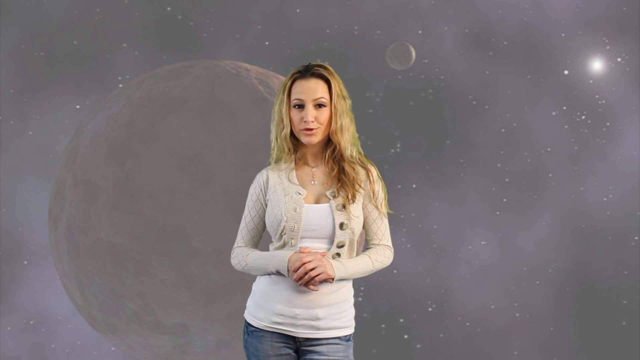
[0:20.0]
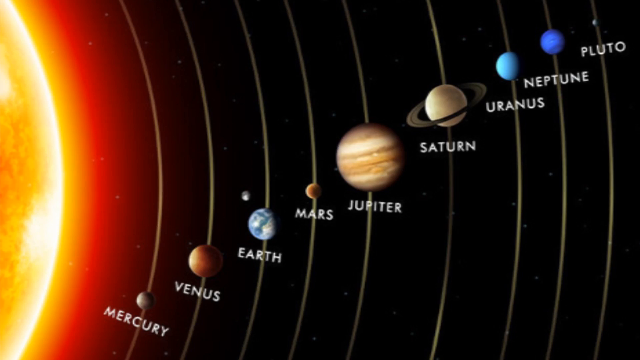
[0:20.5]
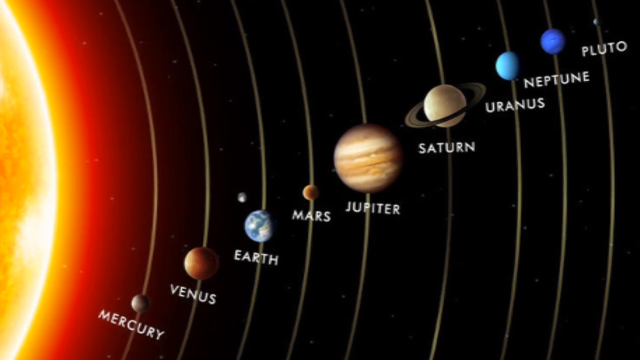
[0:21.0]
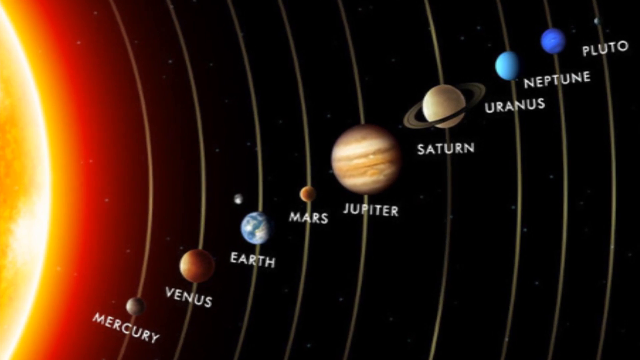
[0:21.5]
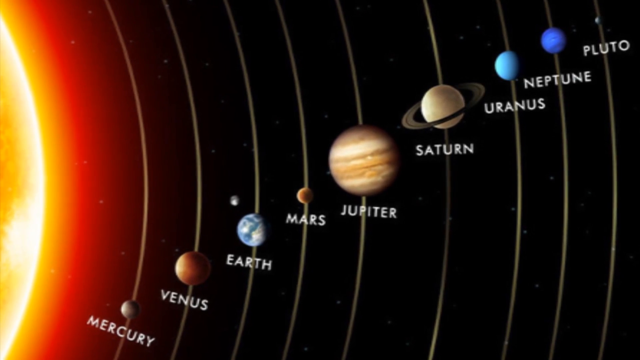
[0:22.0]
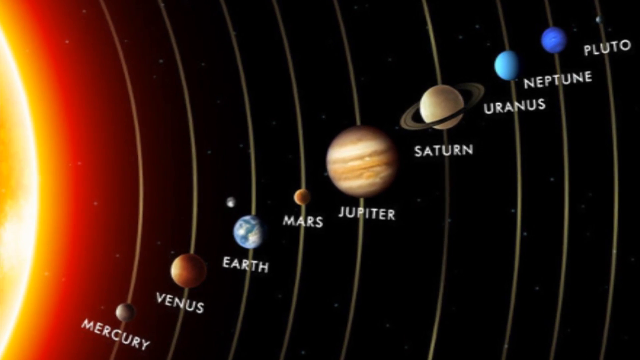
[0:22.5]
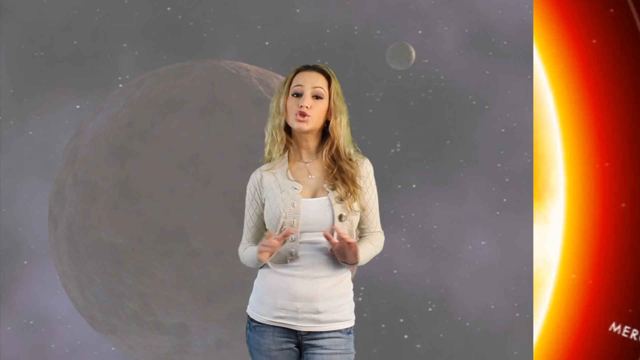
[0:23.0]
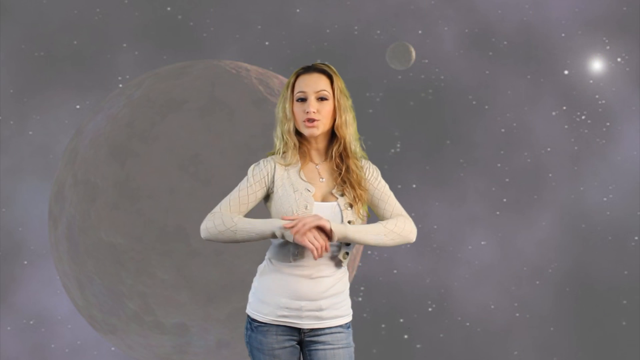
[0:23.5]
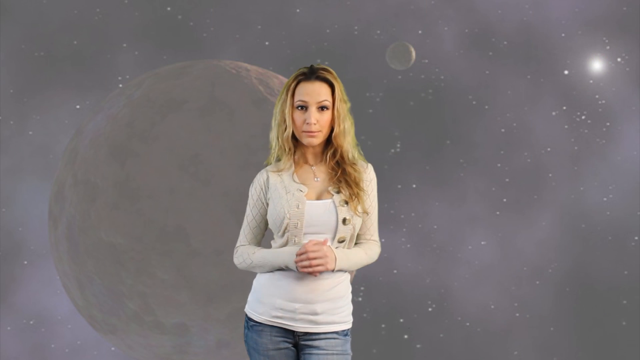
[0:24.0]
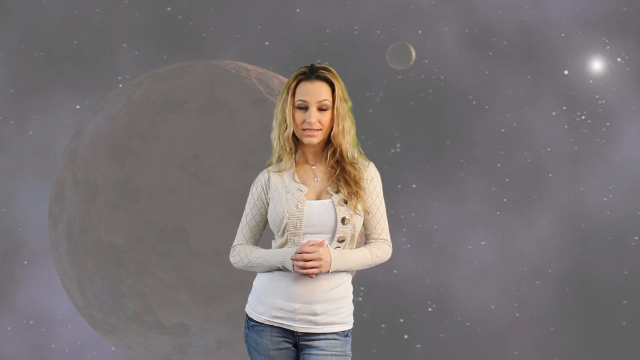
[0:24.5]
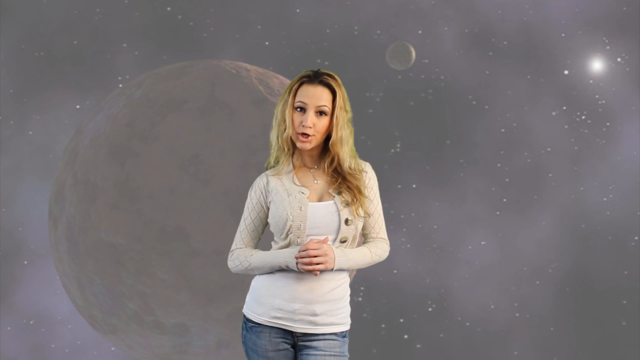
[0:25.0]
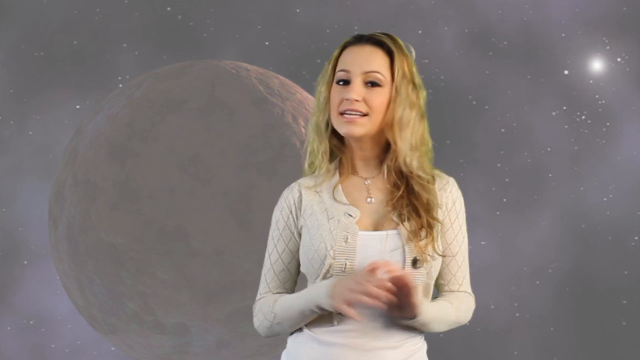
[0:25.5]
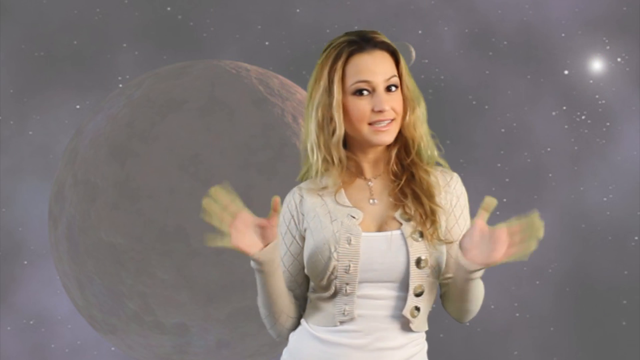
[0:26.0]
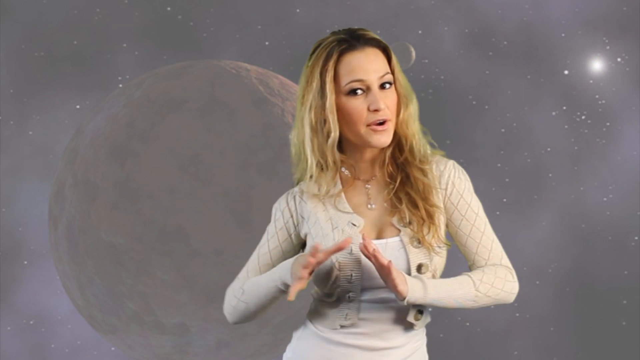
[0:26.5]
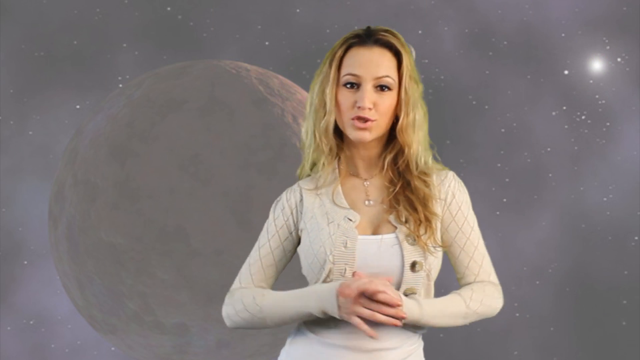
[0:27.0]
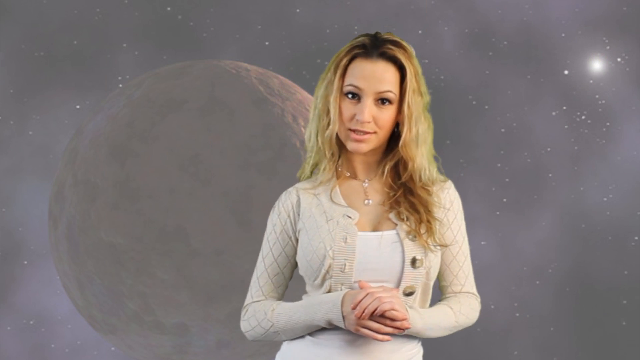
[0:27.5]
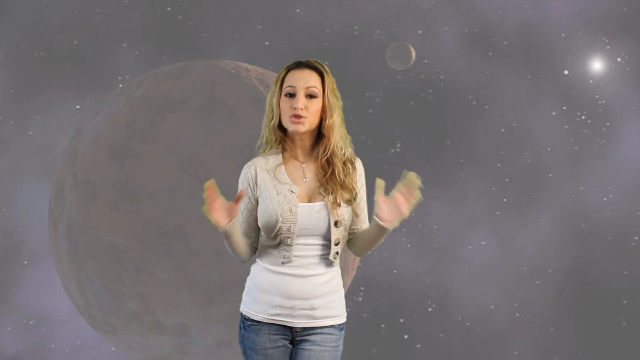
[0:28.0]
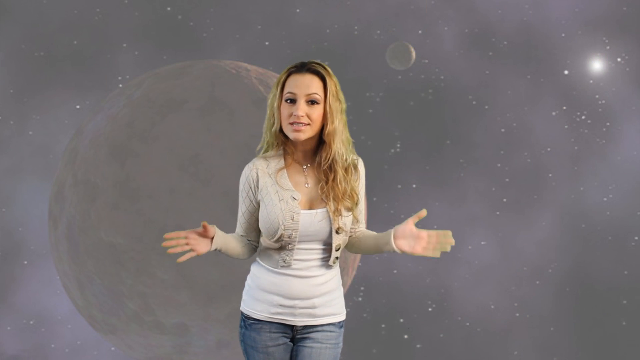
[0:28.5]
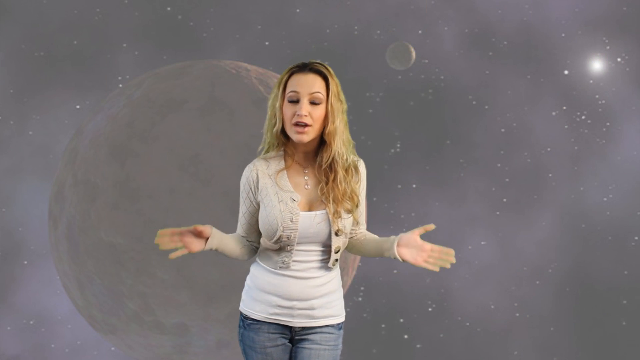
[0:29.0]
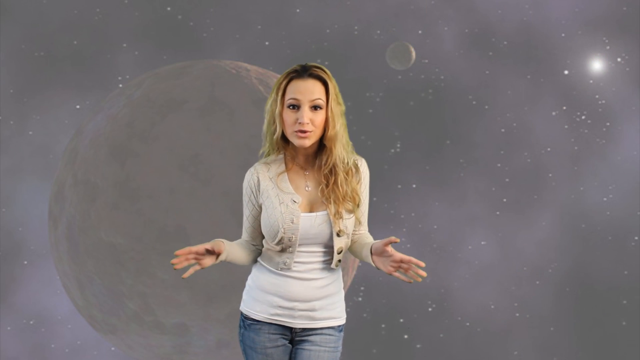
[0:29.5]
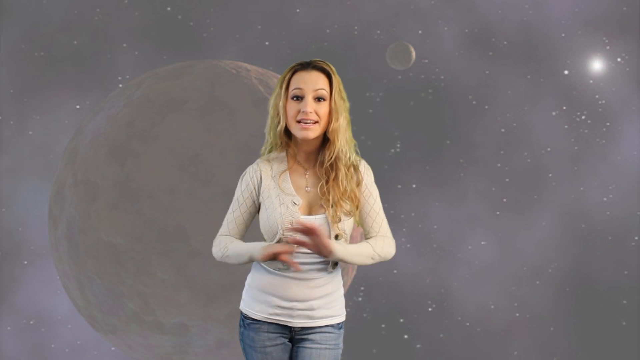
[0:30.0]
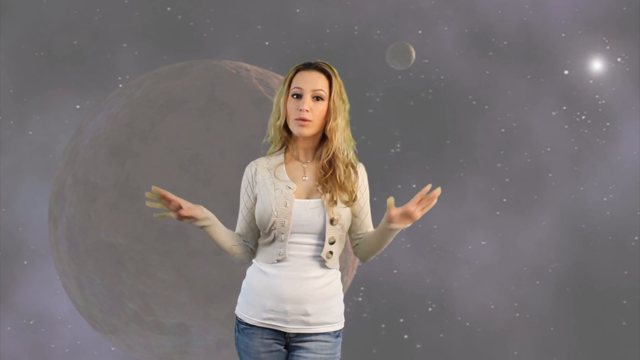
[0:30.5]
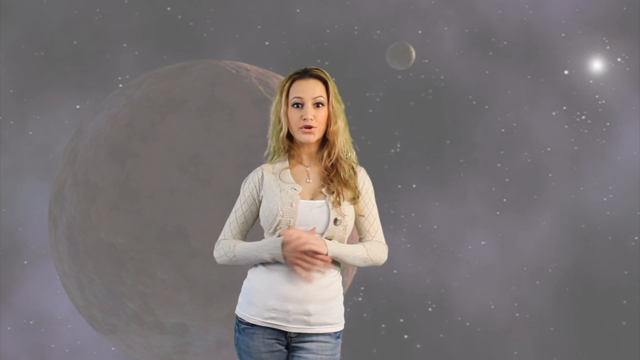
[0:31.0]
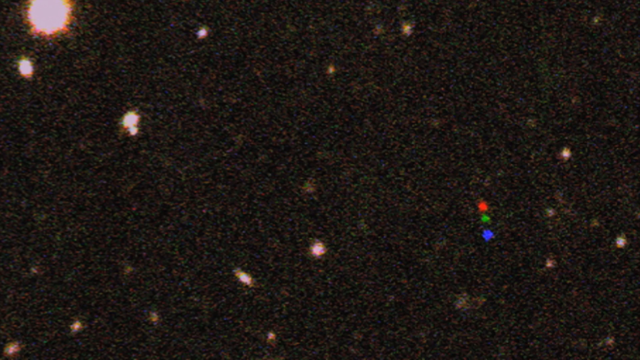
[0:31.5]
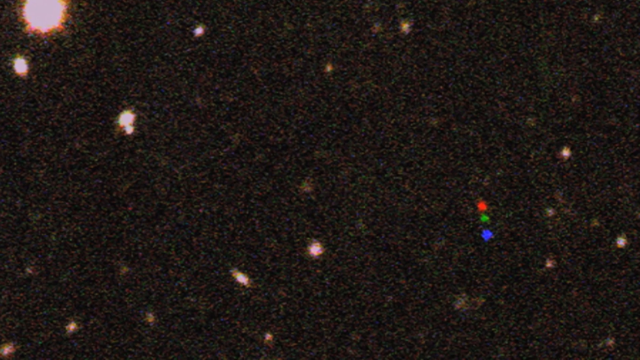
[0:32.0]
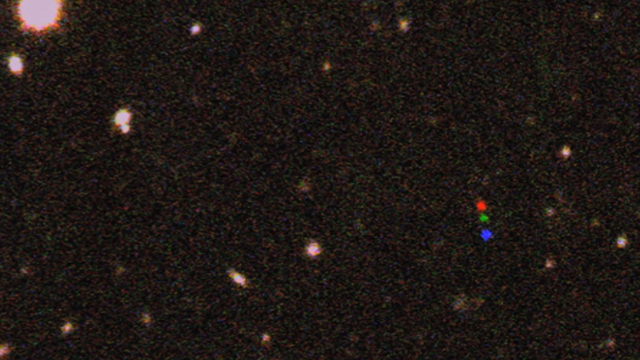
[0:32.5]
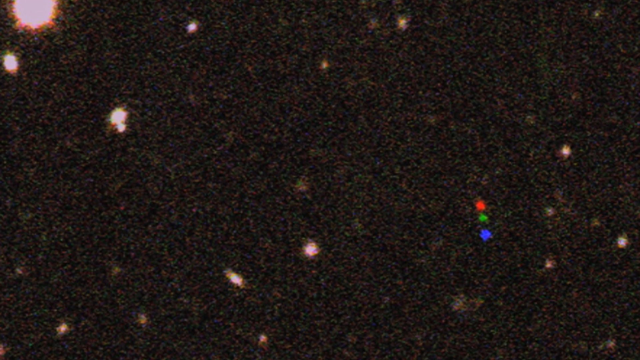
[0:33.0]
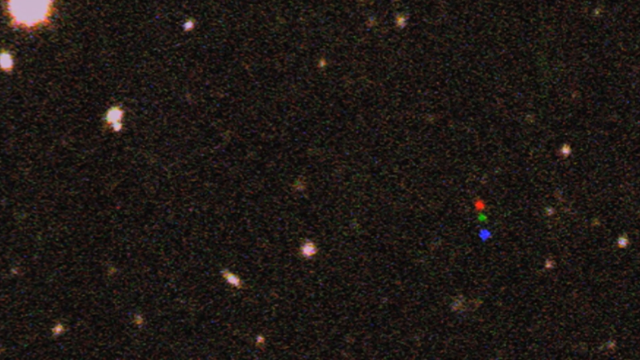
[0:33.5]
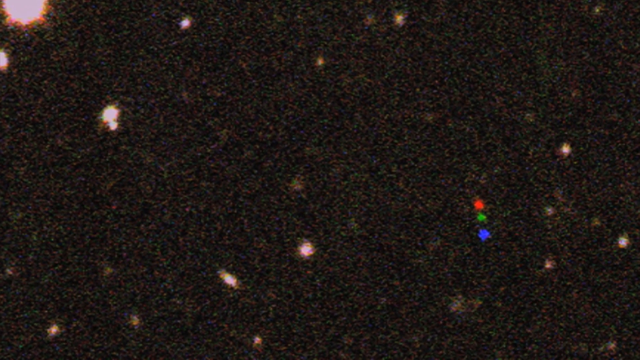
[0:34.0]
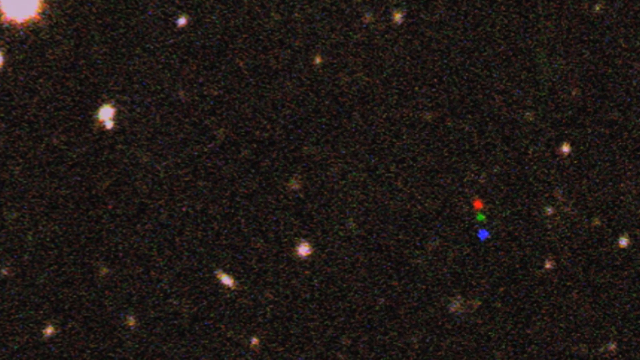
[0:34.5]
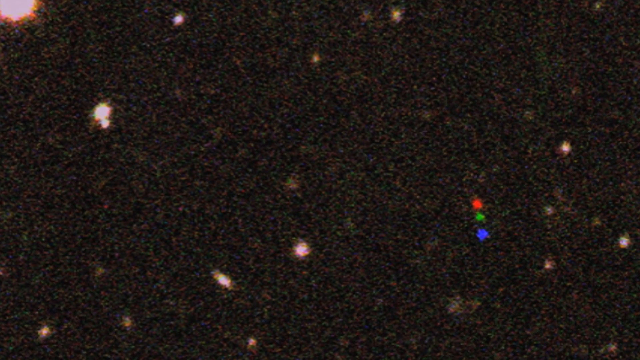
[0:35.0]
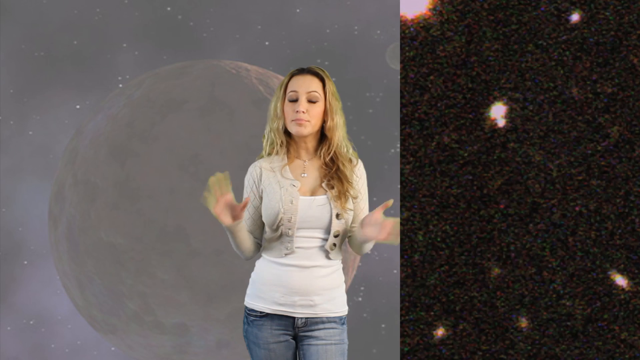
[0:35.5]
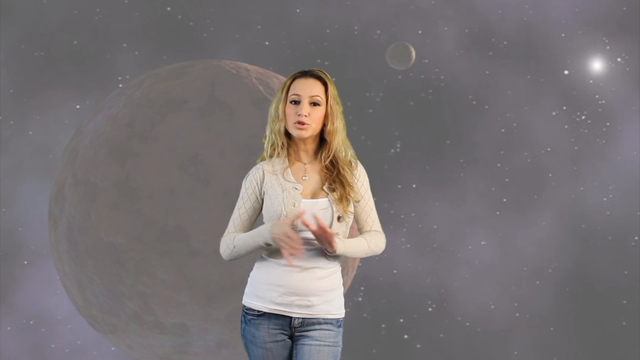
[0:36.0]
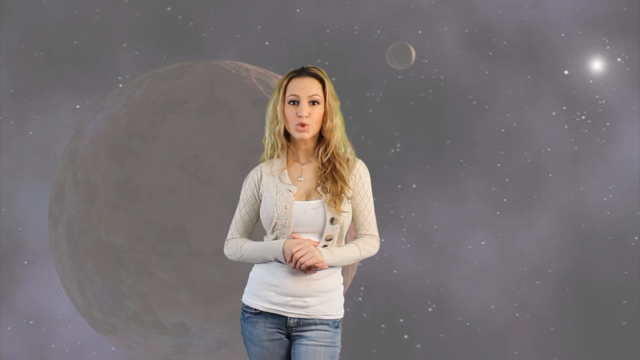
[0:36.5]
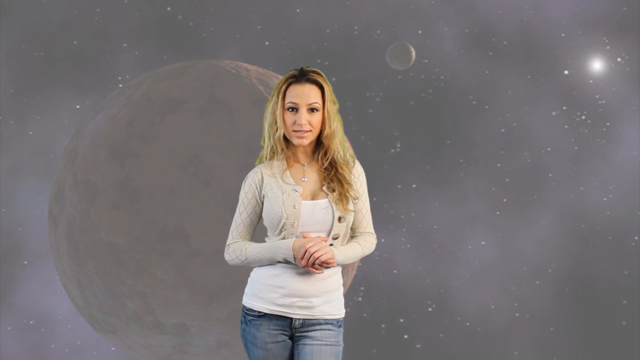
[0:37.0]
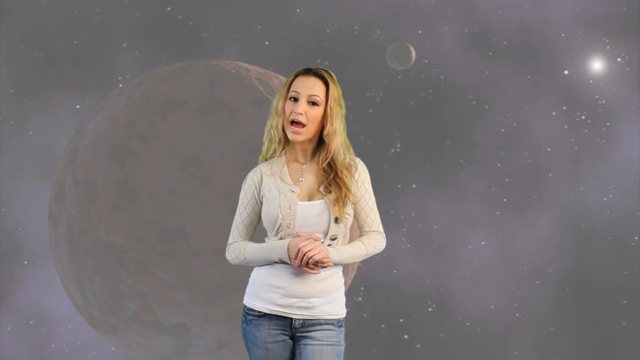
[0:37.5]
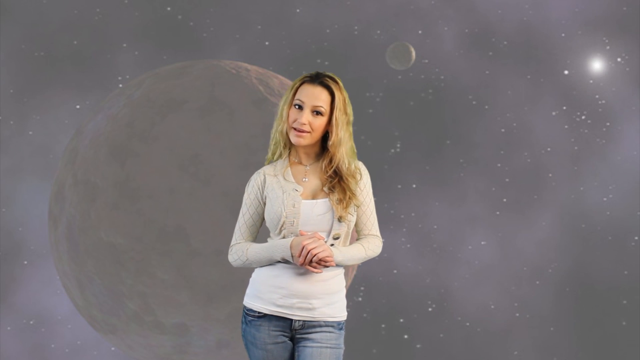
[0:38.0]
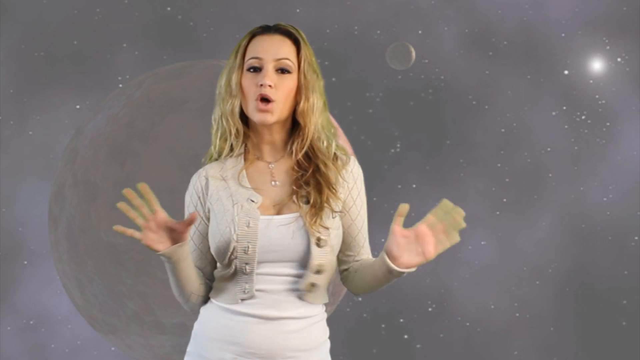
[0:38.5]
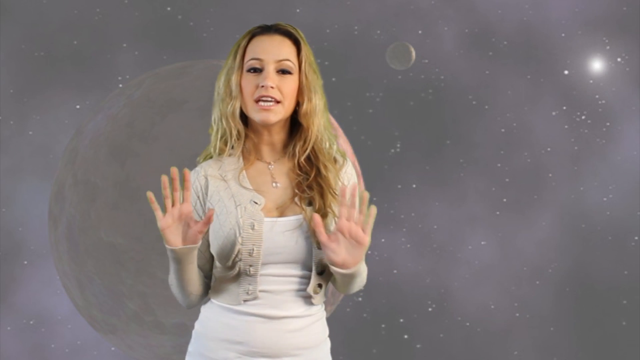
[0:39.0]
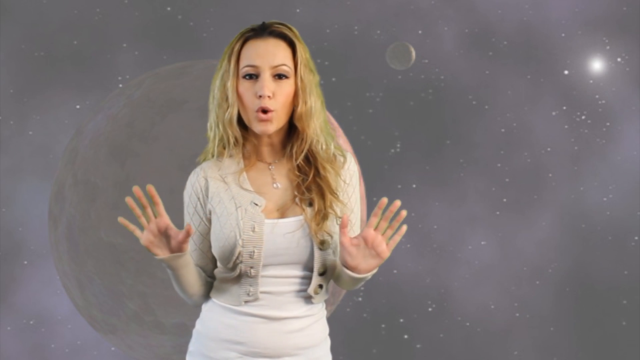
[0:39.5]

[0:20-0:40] A woman in a cream sweater with long, wavy blond hair is speaking. An illustration of our Solar System follows, with the side of the Sun visible on the left and all the planets on their axes: Mercury, Venus, Earth, Mars, Jupiter, Saturn, Uranus, Neptune and Pluto. The camera pans in closer, and again the woman appears speaking, both hands clasped together in front of her and resting on her tummy. She continues talking, gesturing with her hands and head to emphasize her points. Next is an image with a very dark background dotted with dots and blotches of light; three lights in particular, red, green and blue, are dotted one above the other on the lower right side of the screen. The camera pans closer, and again the woman is seen speaking.